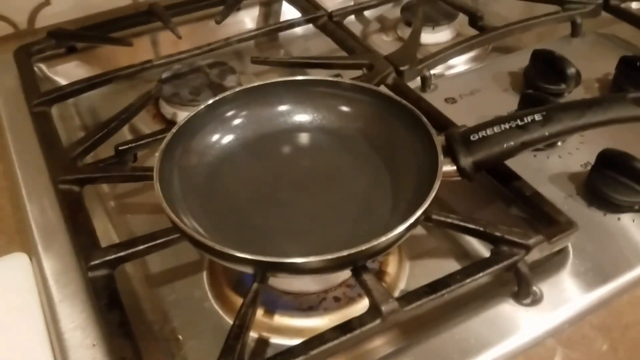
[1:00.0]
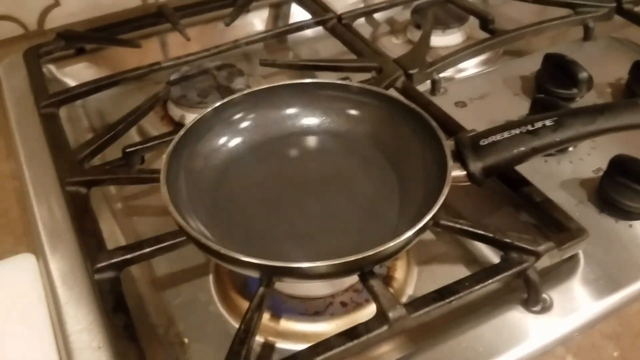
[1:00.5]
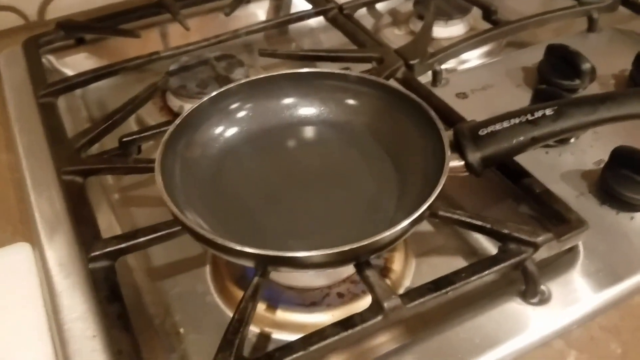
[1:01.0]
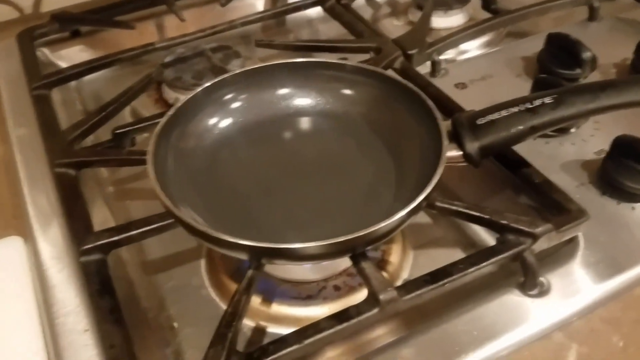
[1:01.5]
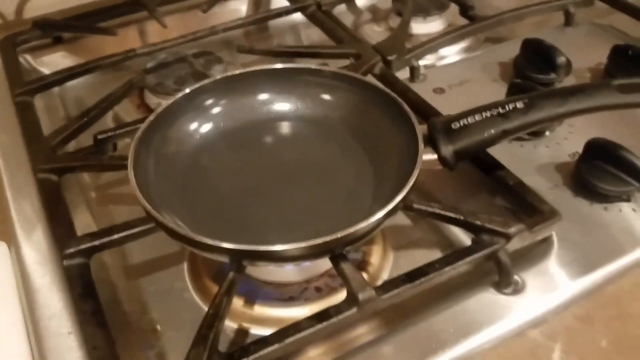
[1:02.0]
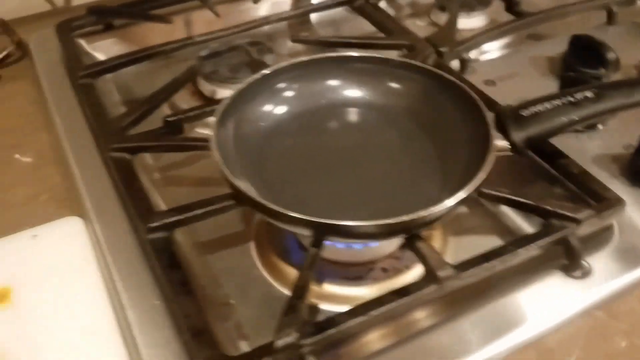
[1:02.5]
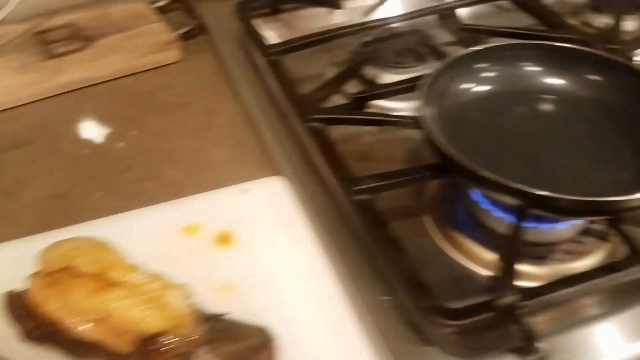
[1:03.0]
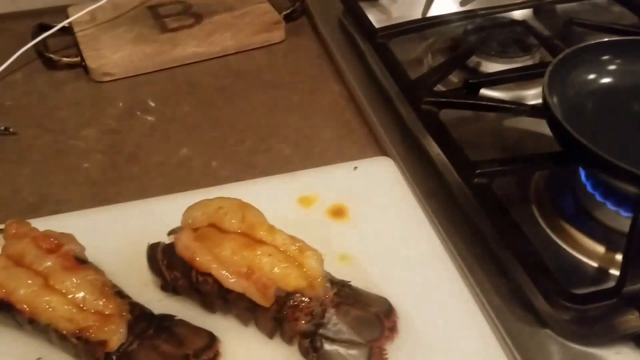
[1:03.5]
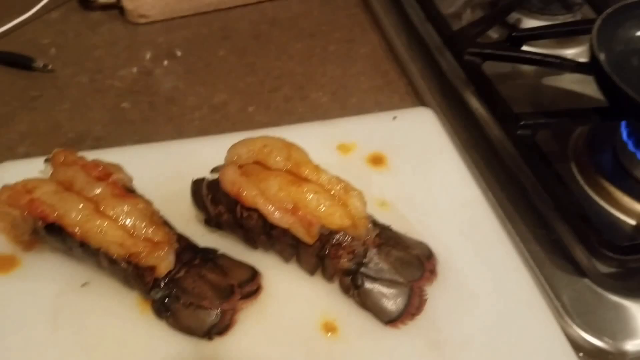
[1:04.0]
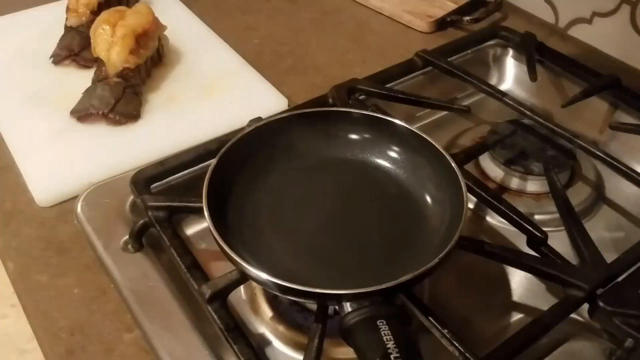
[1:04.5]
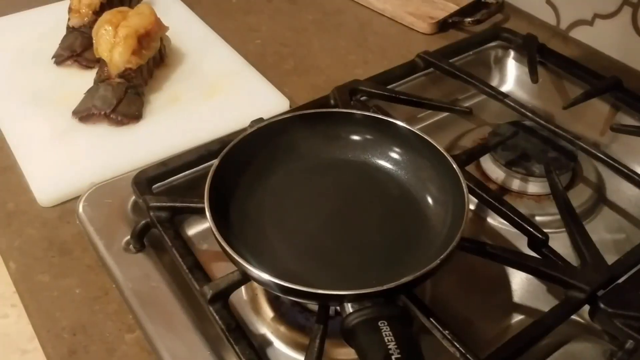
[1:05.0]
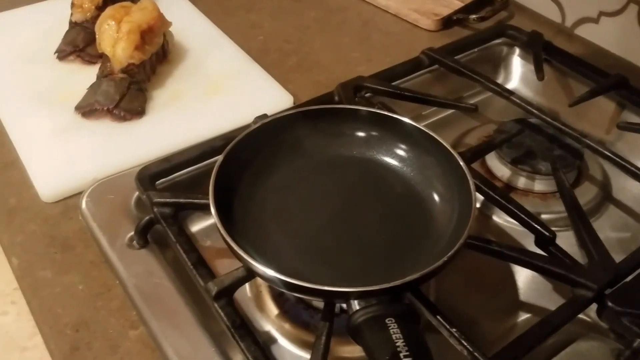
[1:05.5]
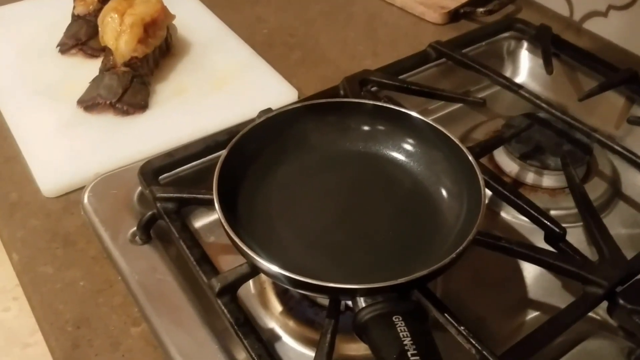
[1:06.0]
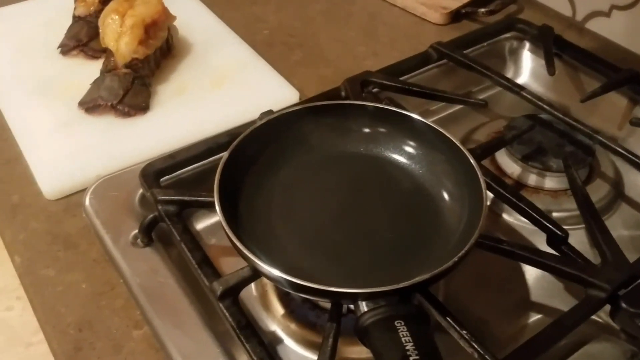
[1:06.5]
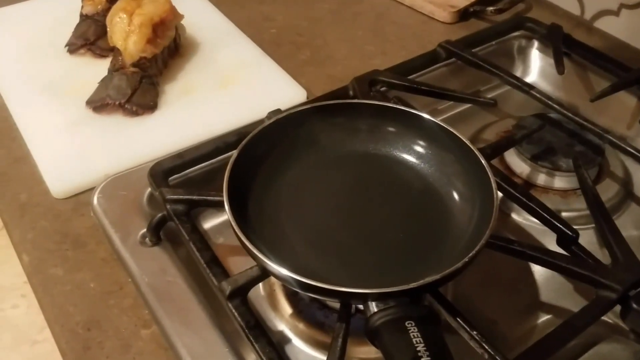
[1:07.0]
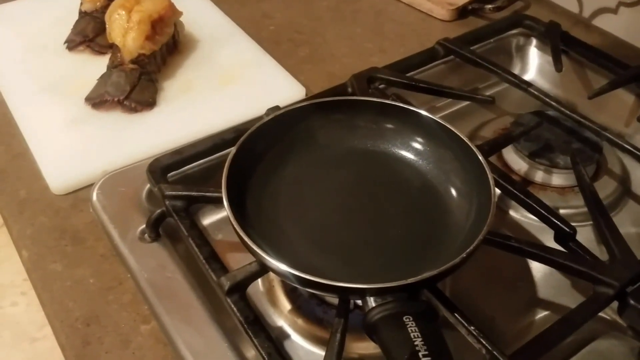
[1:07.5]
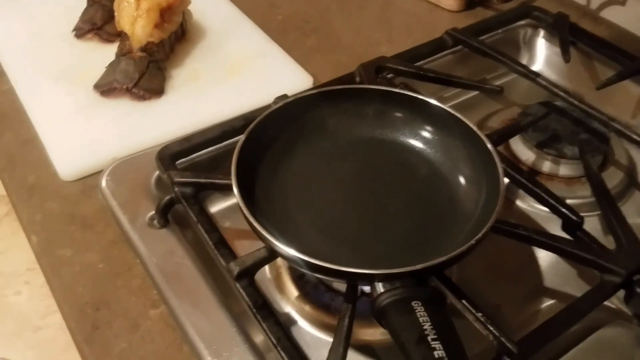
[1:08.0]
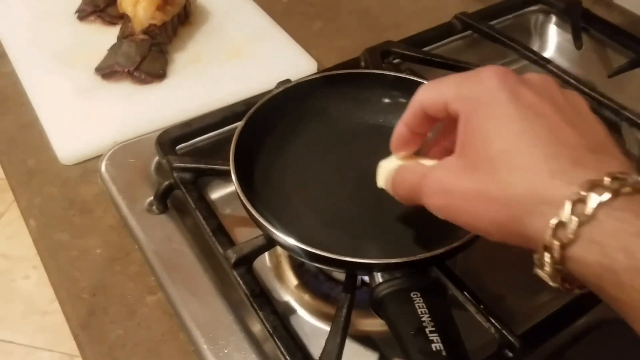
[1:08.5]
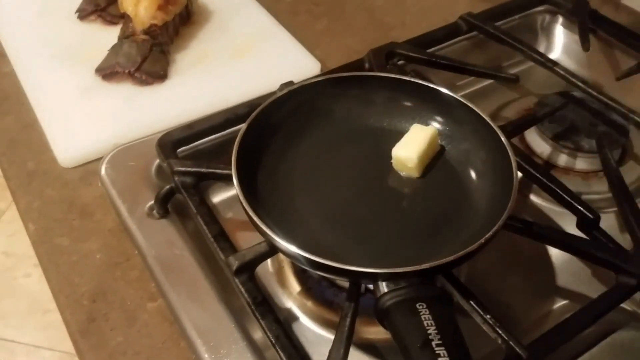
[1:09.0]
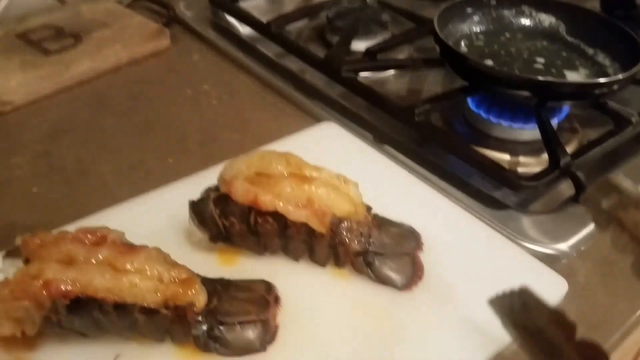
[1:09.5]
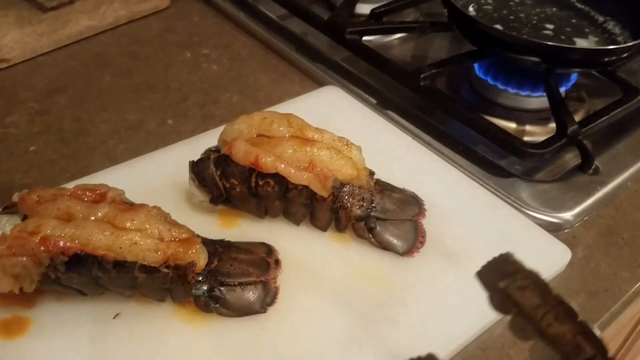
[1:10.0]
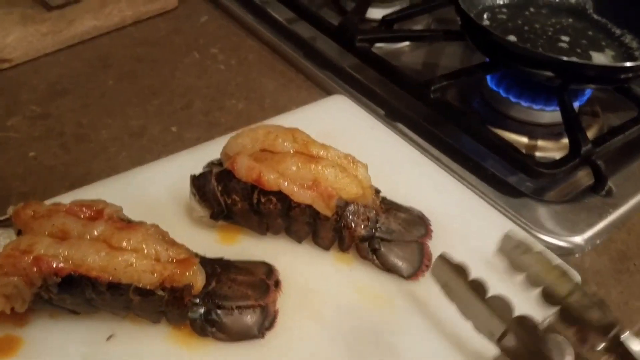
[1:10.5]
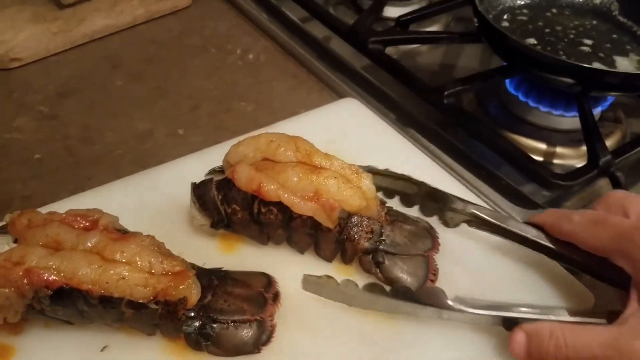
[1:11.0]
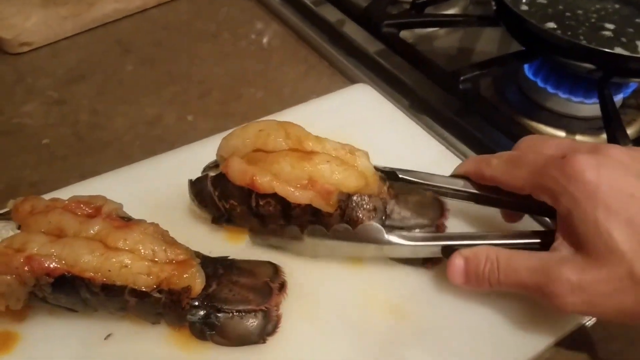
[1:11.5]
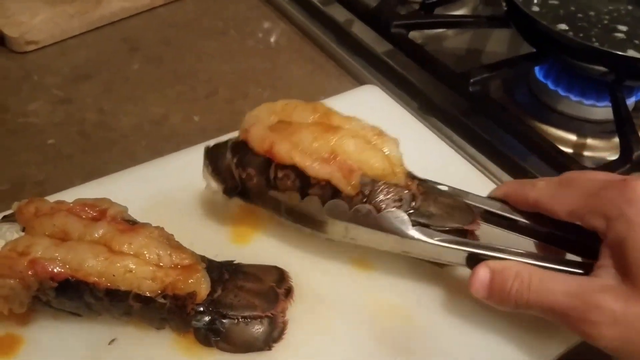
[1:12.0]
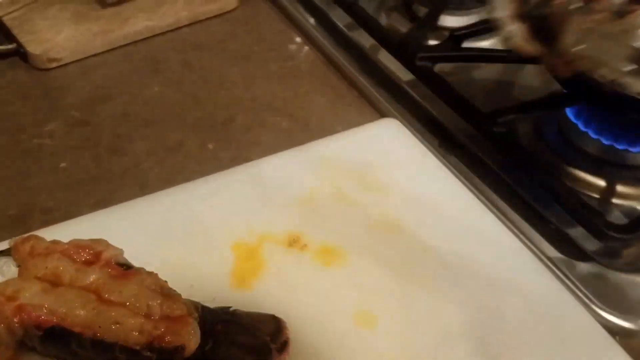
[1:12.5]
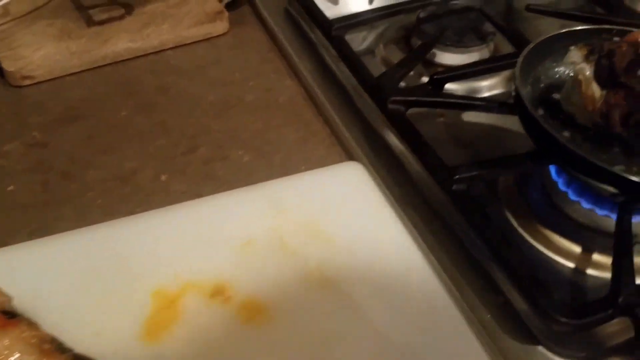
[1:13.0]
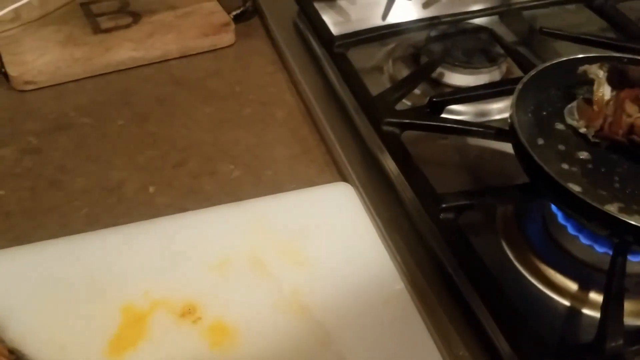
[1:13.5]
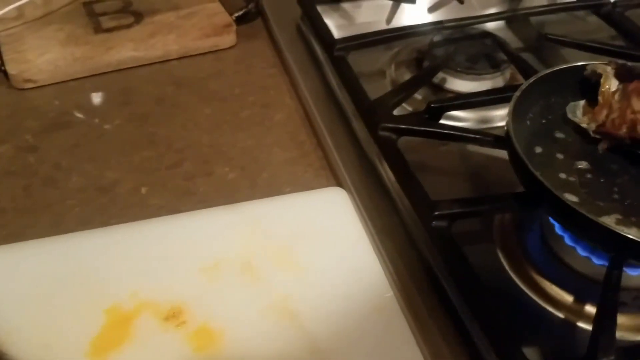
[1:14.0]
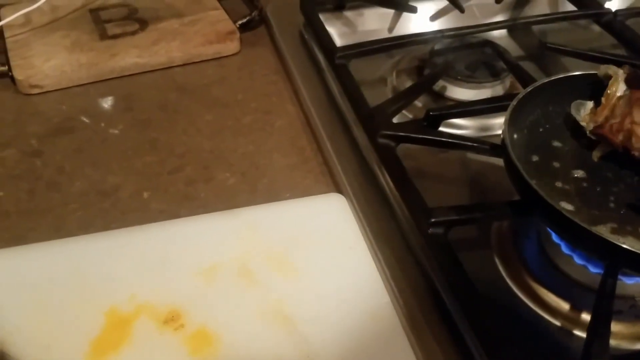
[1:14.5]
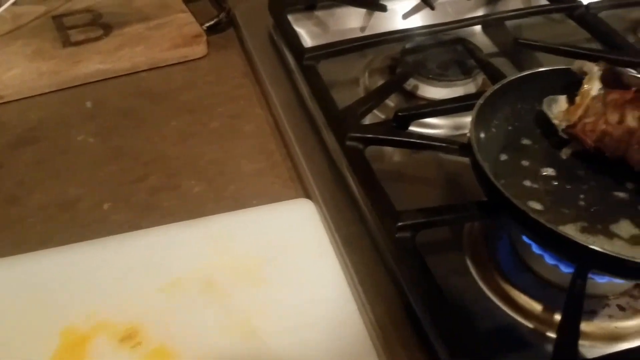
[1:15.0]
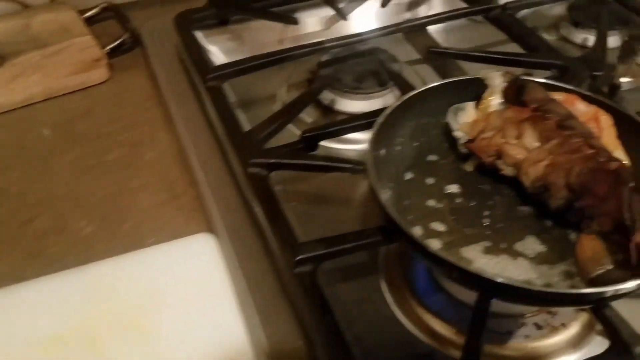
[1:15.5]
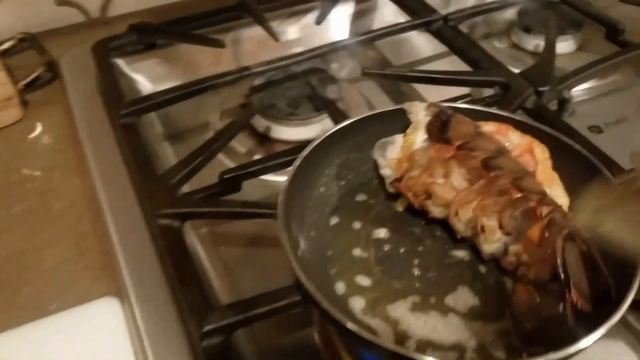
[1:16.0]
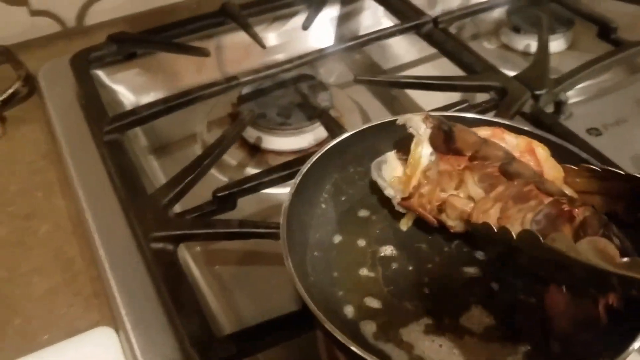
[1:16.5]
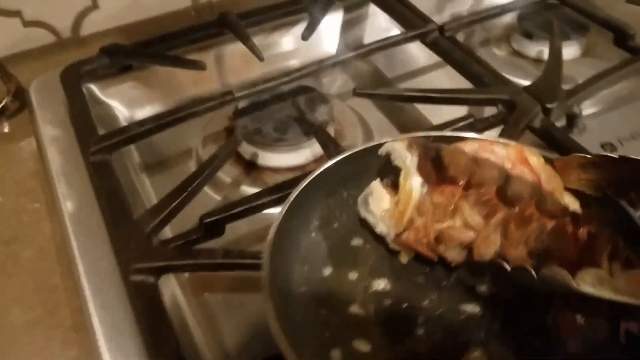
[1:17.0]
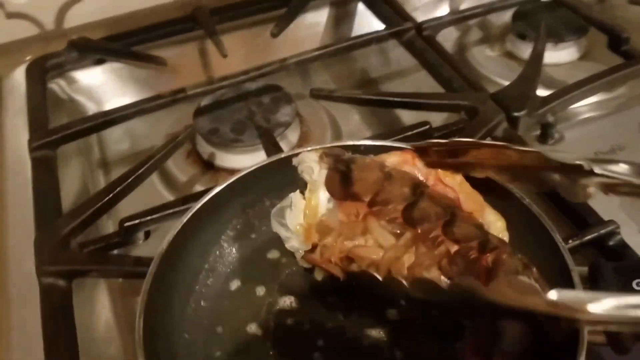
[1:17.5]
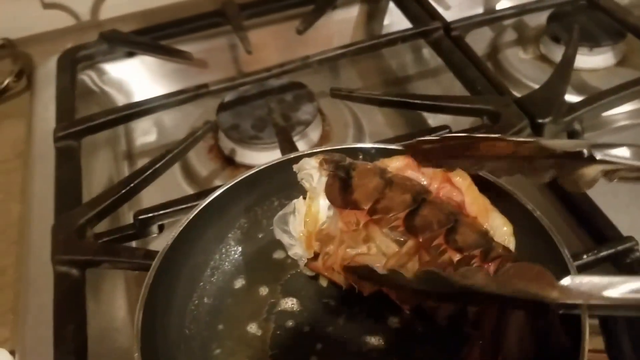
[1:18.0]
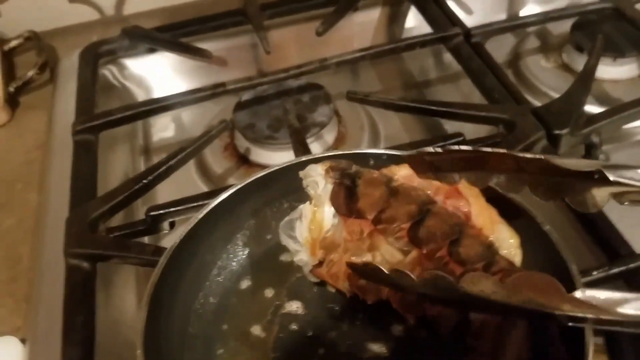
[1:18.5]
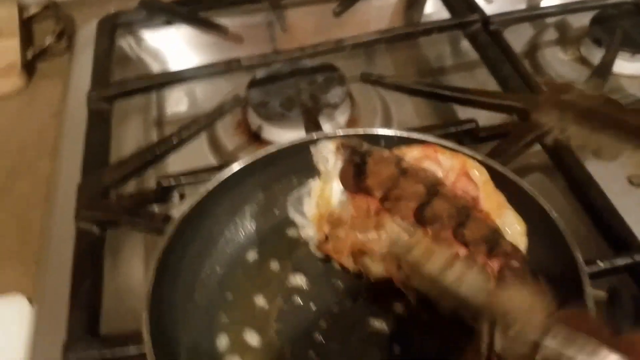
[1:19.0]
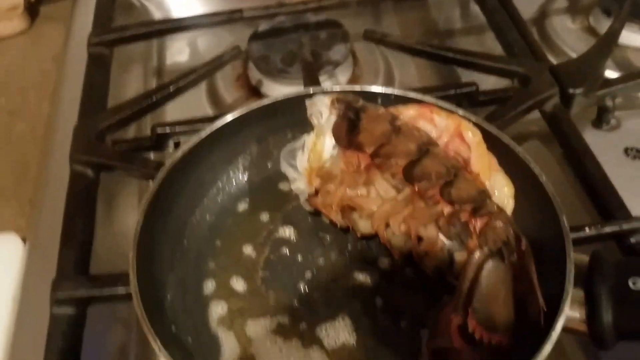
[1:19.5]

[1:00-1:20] A black pan with a black handle, with "Green Life" written on it, is on a gas stove with a blue flame underneath. The camera moves to the left, where there is a white square plate with two lobster tails that are cut open. They now look brown from the sauce the cook marinated or brushed onto them. The angle changes from a side view to what looks like an aerial view, showing the lobster tails on the square plate as well as the round pan on the stove. A hand quickly appears with butter and throws it into the hot pan on the stove. The view returns to the two lobster tails, and the hand, now carrying tongs, picks up a lobster tail and puts it in the pan, sitting it nicely as it cooks.